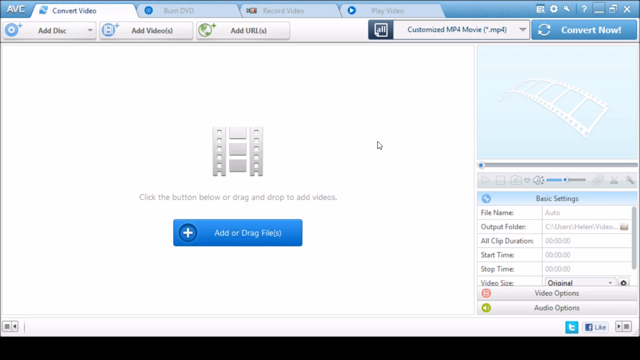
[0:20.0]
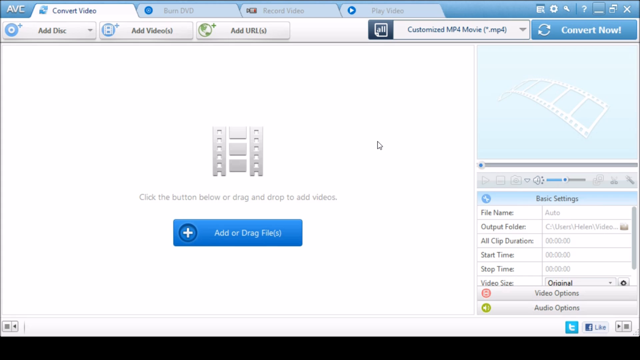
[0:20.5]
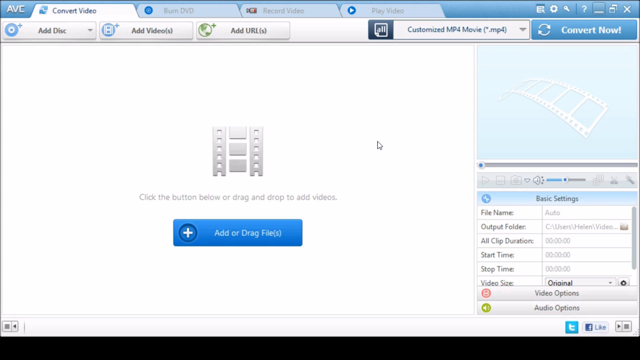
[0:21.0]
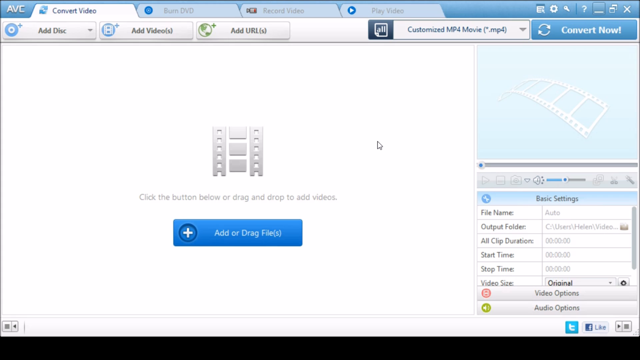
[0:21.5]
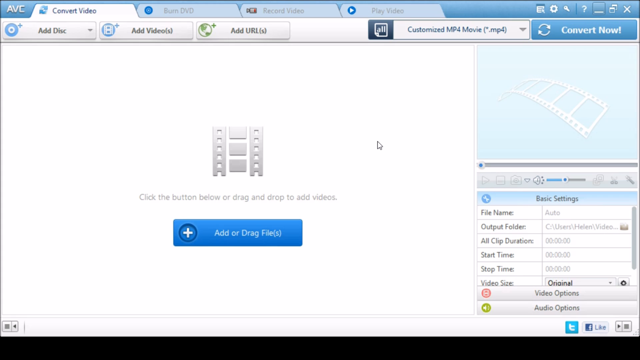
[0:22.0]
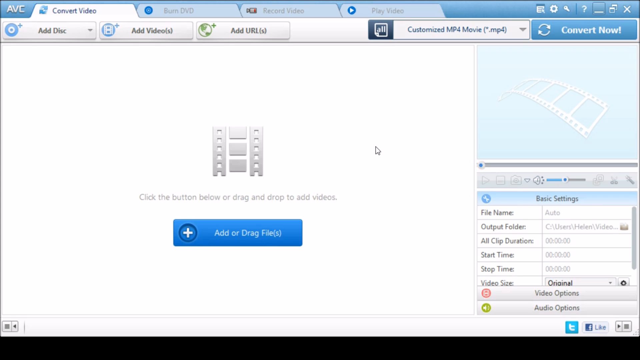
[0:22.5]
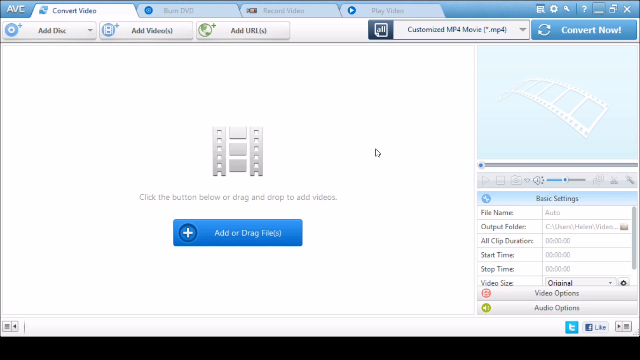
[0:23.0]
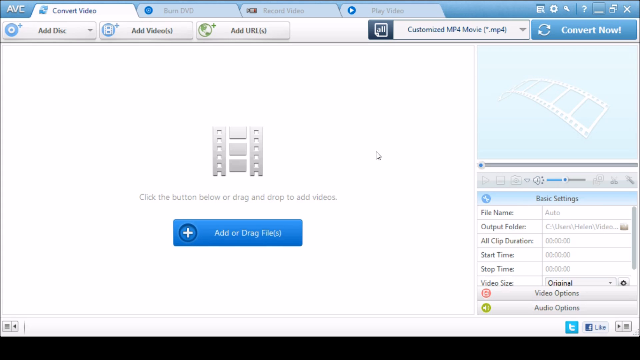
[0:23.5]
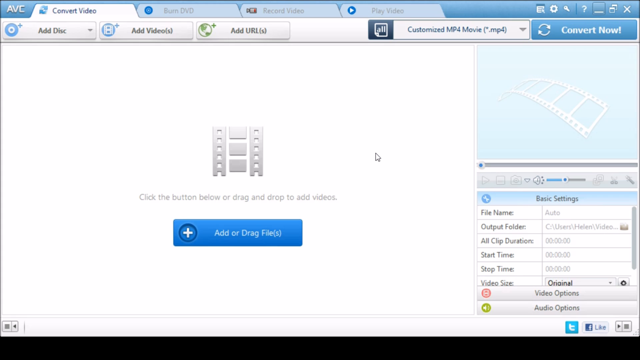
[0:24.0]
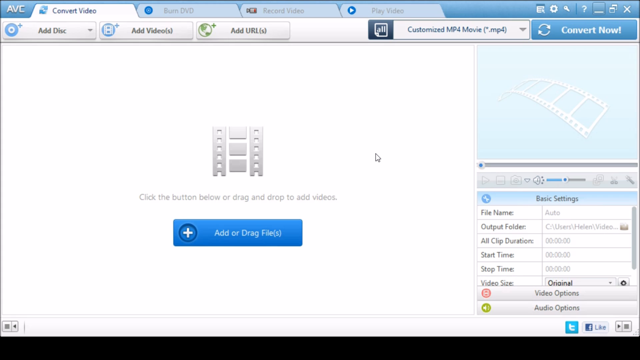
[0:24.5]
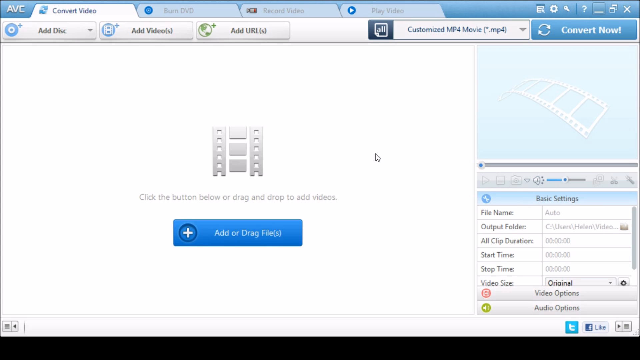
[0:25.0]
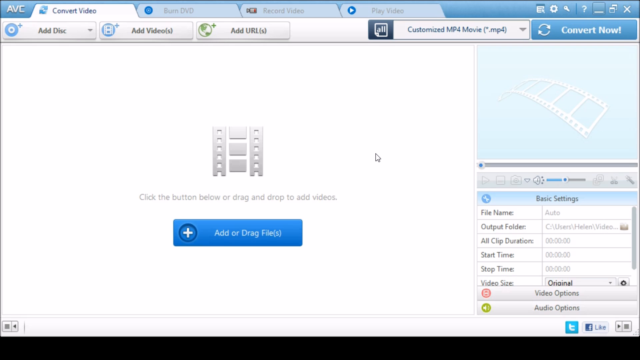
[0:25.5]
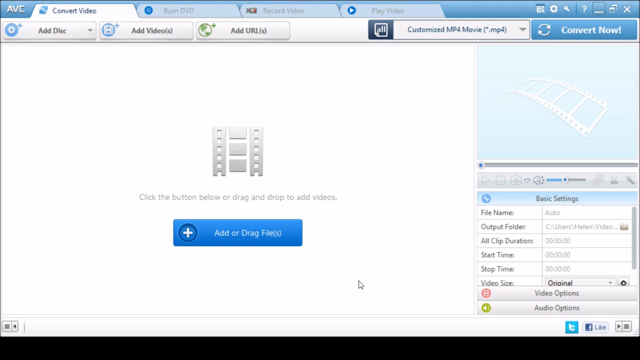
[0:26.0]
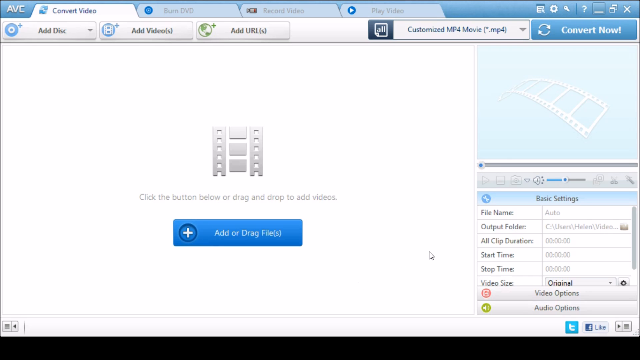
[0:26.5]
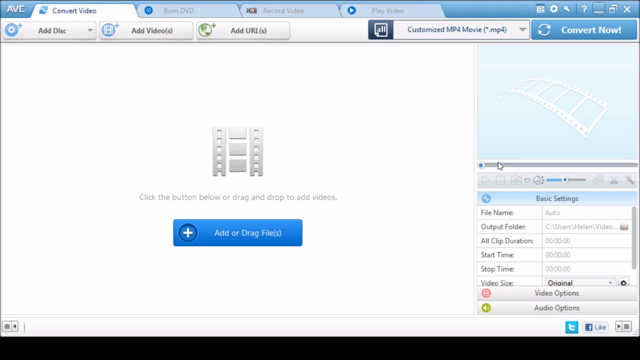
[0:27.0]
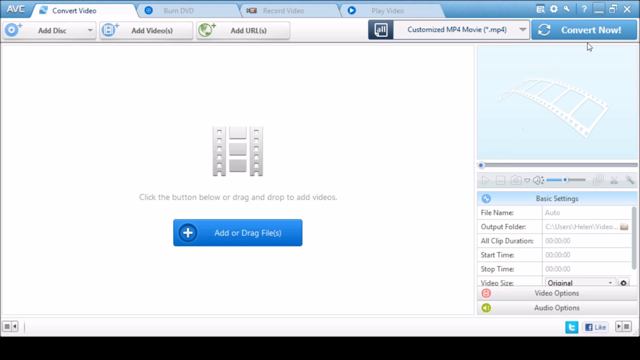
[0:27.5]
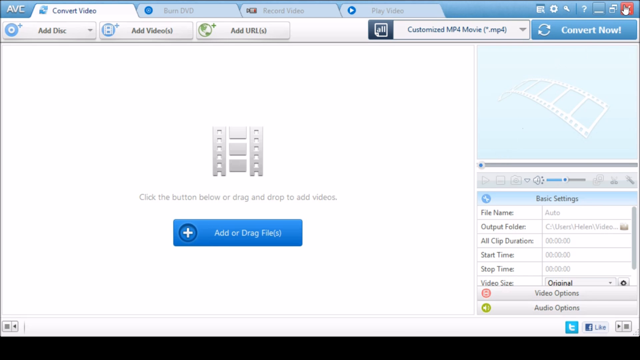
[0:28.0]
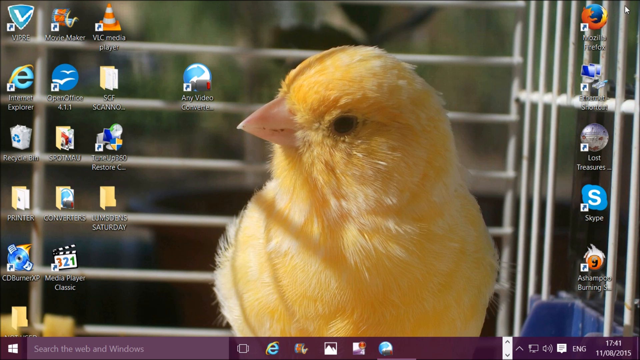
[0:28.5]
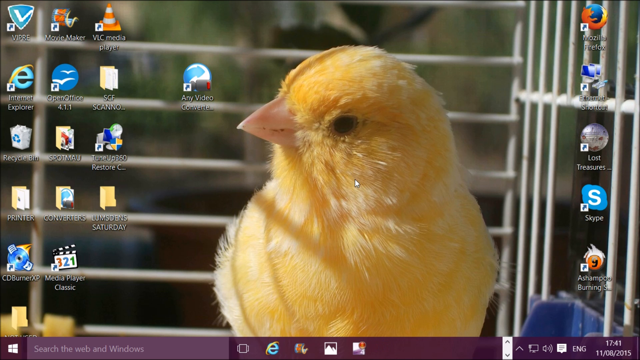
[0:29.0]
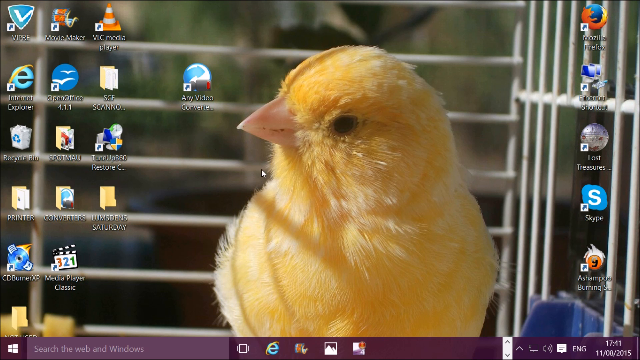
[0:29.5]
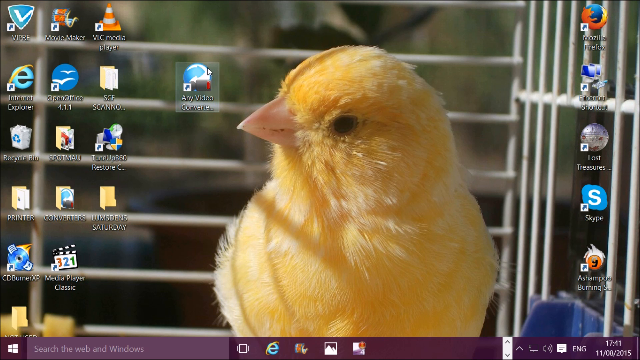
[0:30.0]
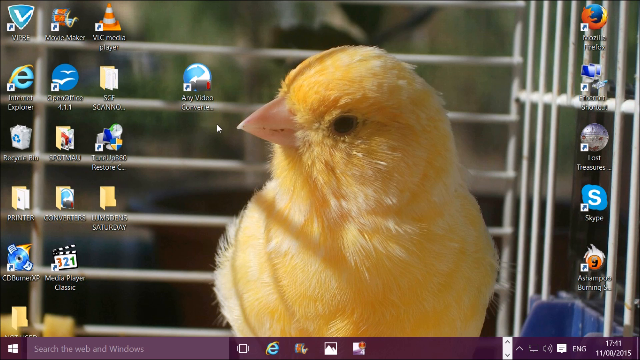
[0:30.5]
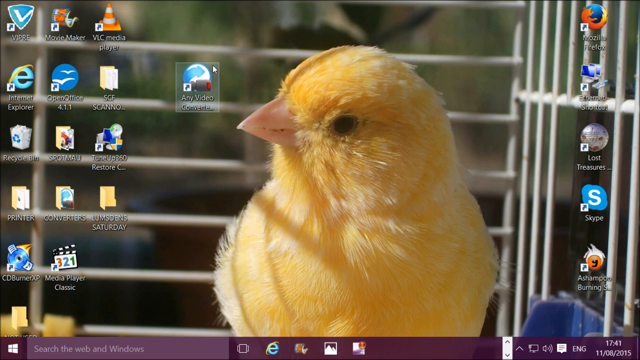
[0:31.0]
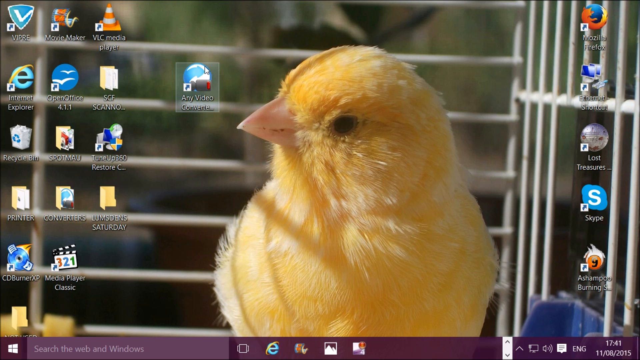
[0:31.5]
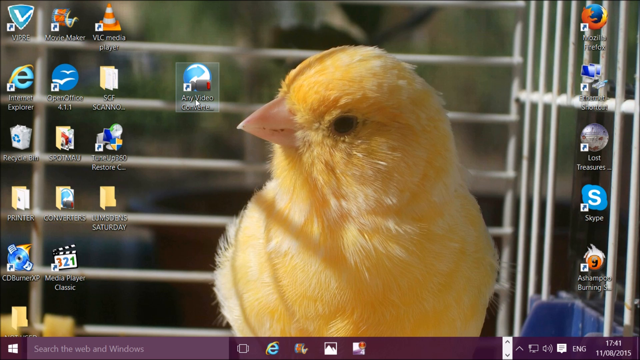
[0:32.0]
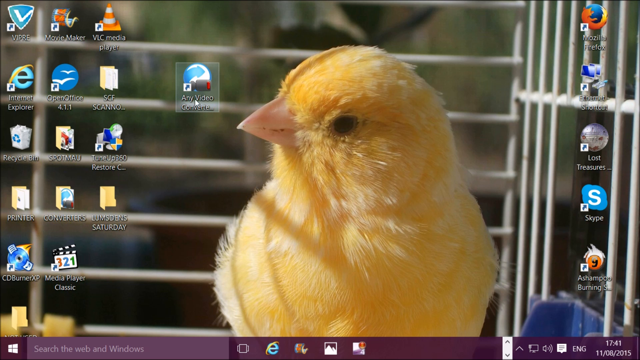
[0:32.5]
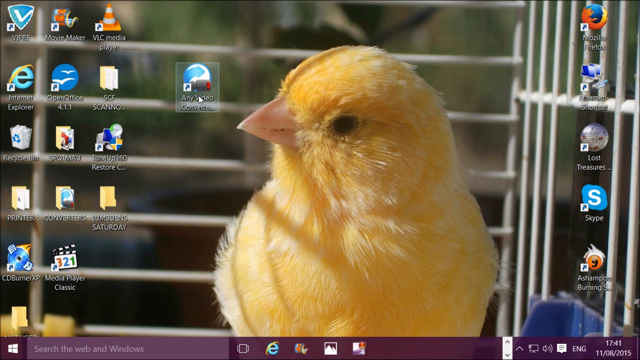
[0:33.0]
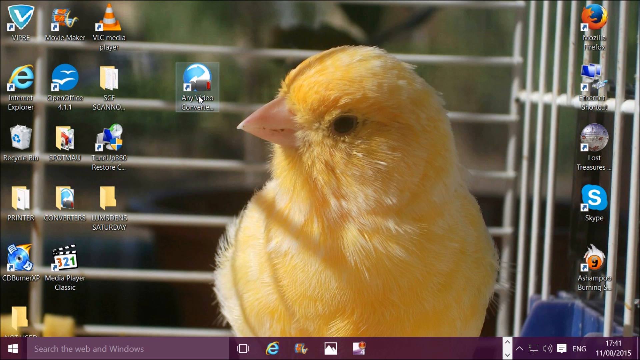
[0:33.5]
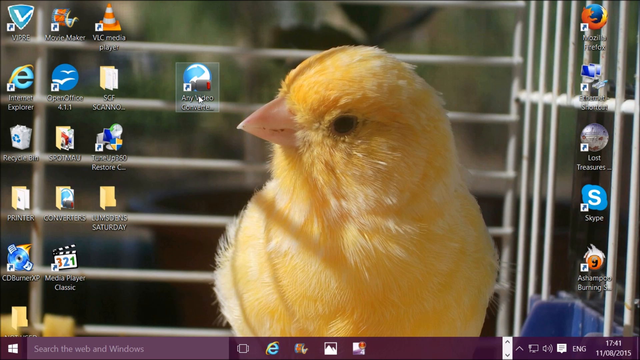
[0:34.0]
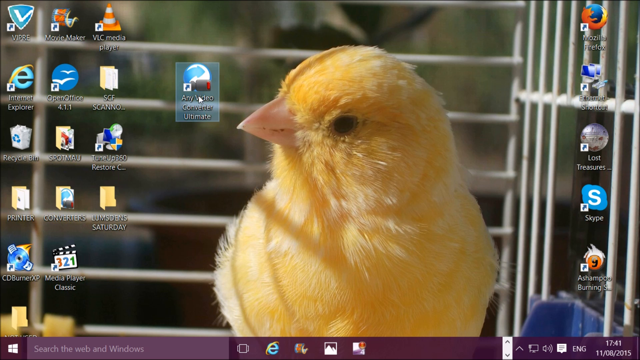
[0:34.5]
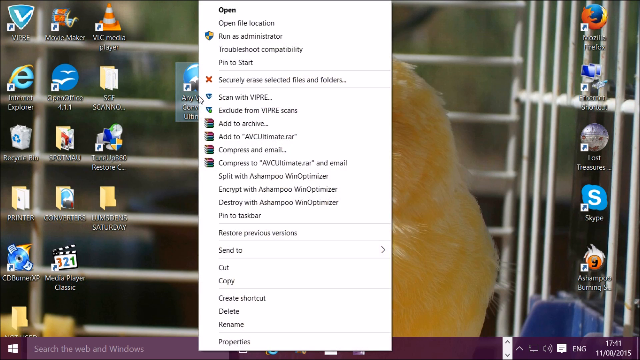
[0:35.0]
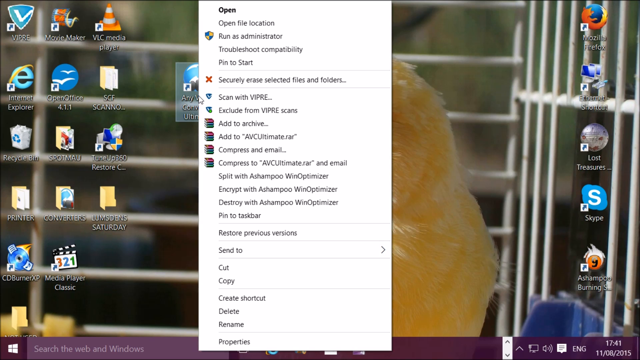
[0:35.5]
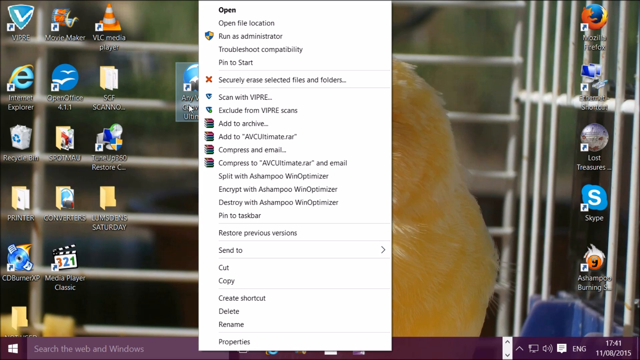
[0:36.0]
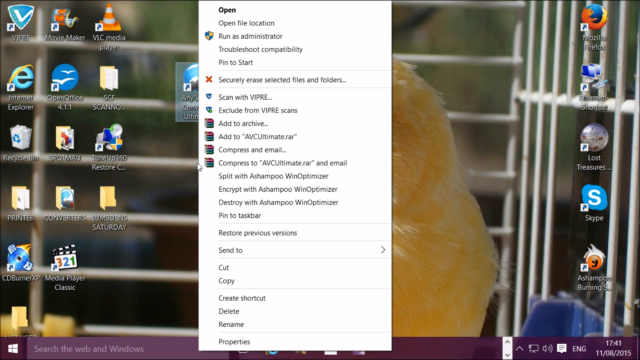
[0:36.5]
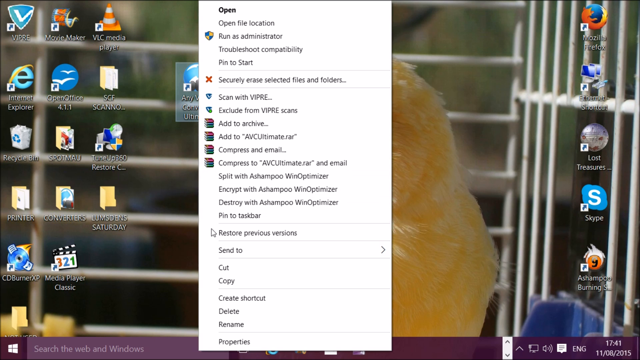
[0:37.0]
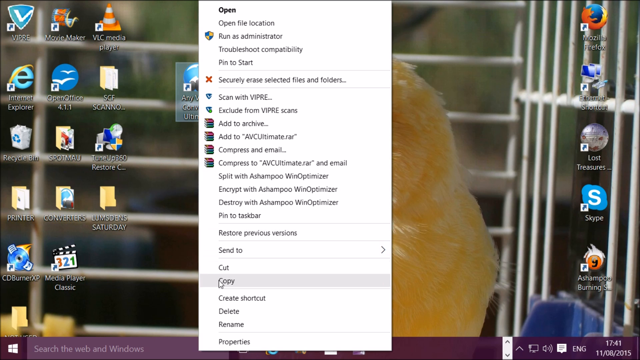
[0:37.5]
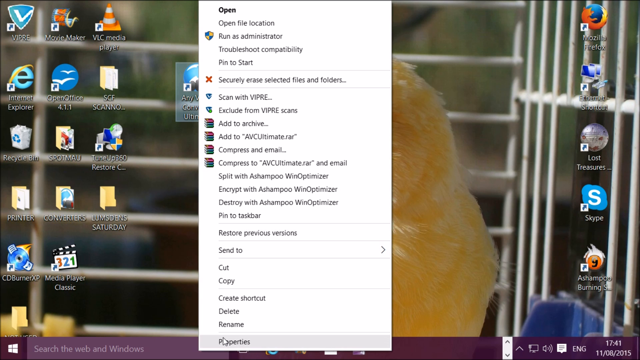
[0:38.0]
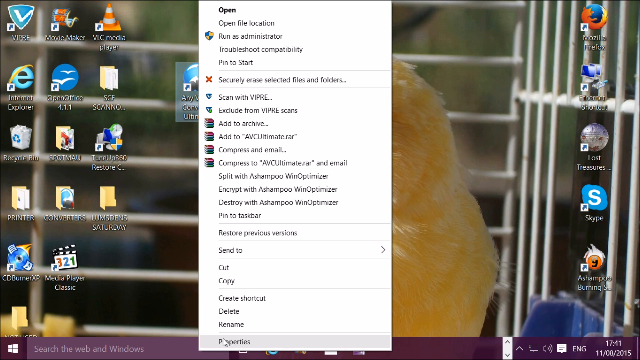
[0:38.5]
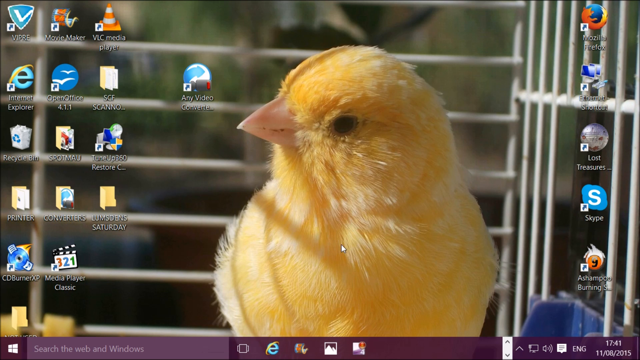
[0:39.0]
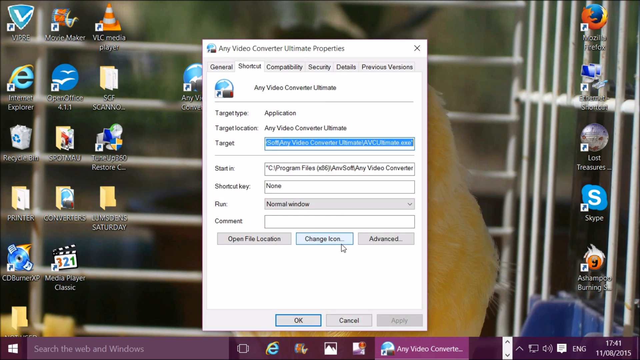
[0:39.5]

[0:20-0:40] The person tries to play the video, but it does not play. The person then cuts the whole file and tries to open another file. The Windows wallpaper is visible, showing a yellow bird. The person is trying to show something from the file.